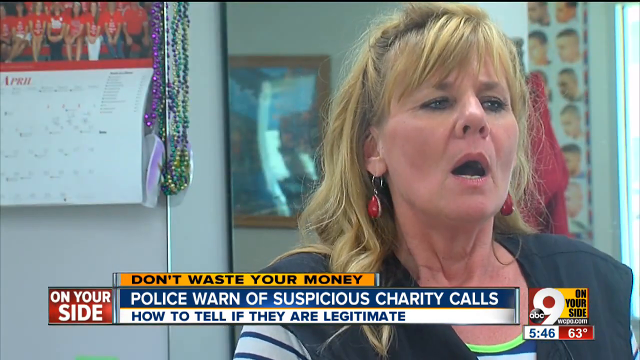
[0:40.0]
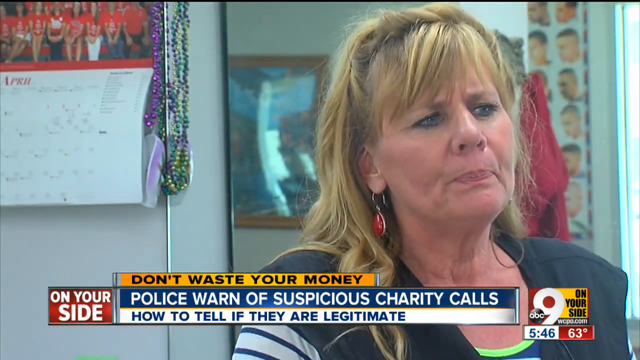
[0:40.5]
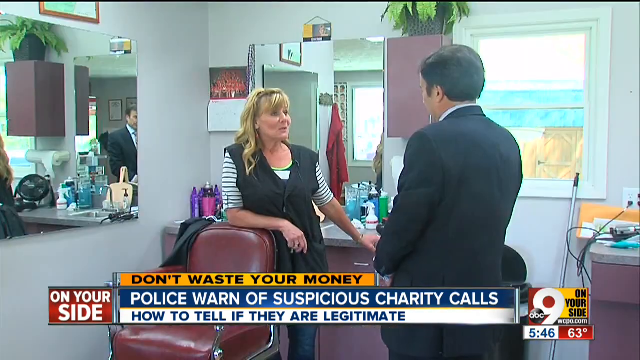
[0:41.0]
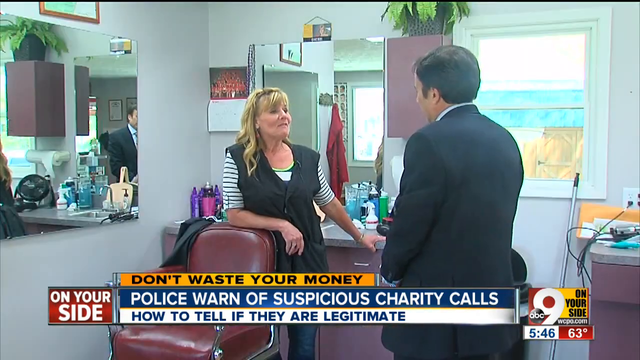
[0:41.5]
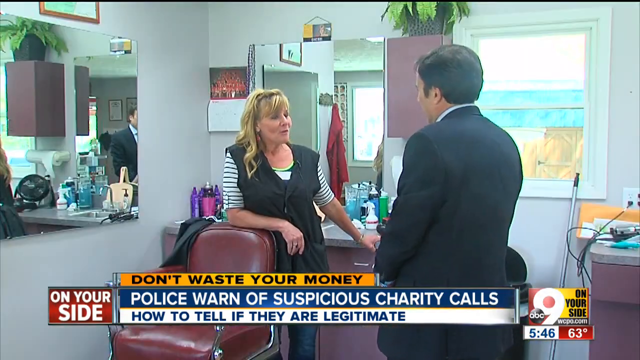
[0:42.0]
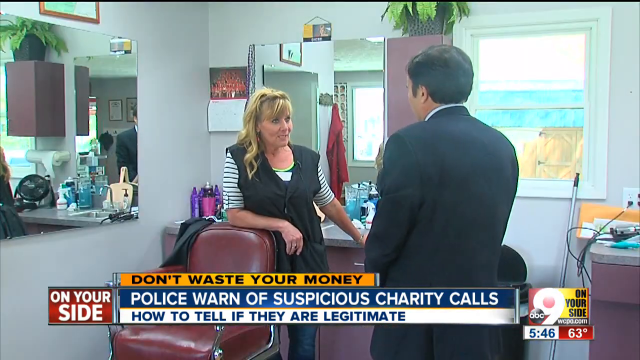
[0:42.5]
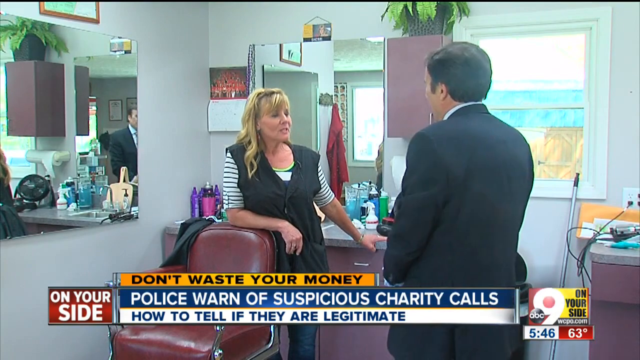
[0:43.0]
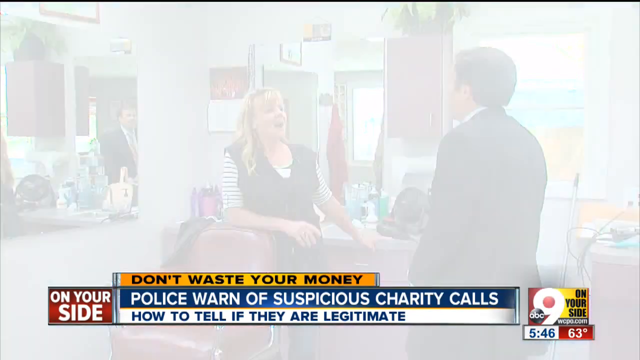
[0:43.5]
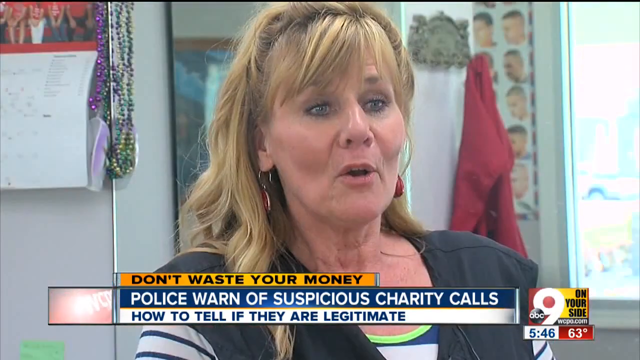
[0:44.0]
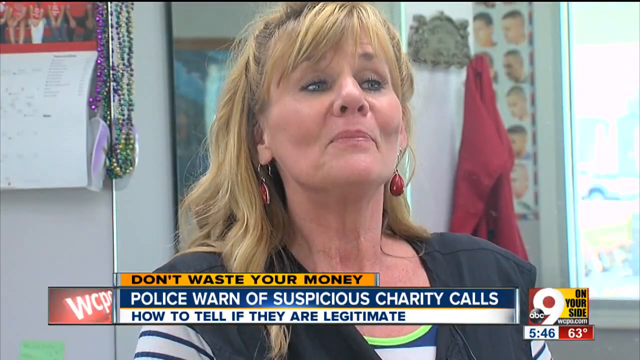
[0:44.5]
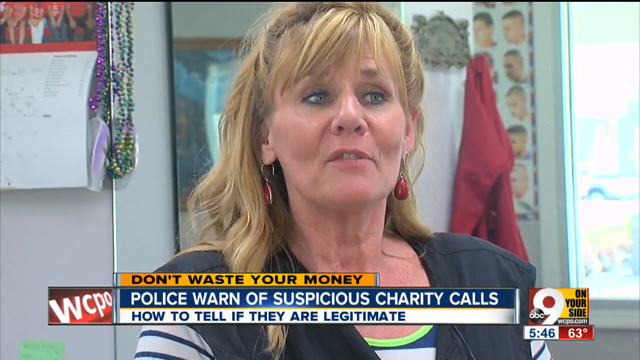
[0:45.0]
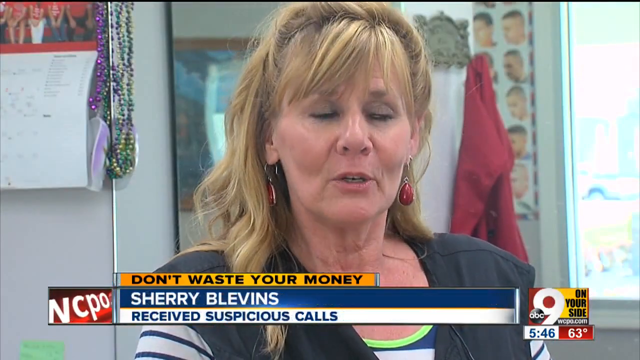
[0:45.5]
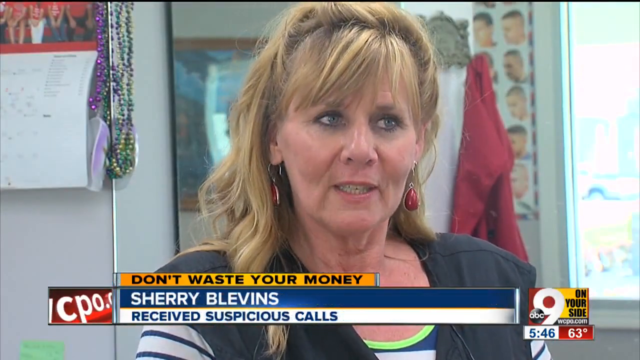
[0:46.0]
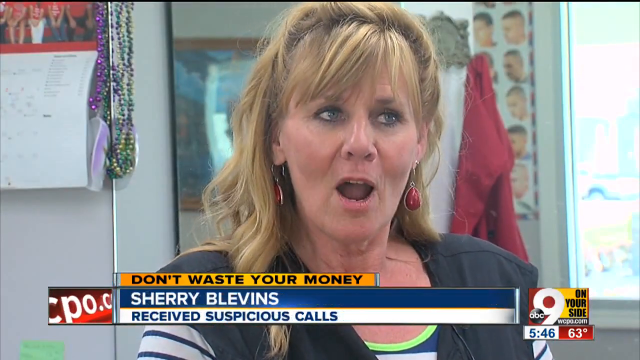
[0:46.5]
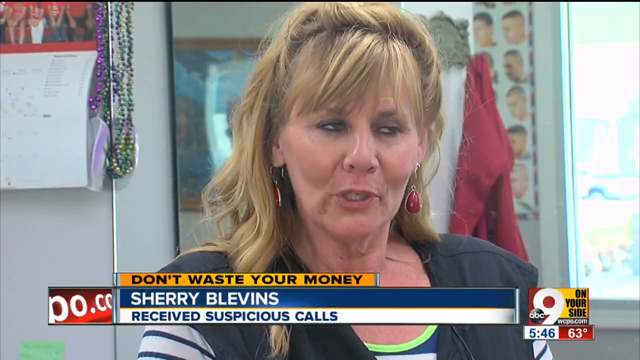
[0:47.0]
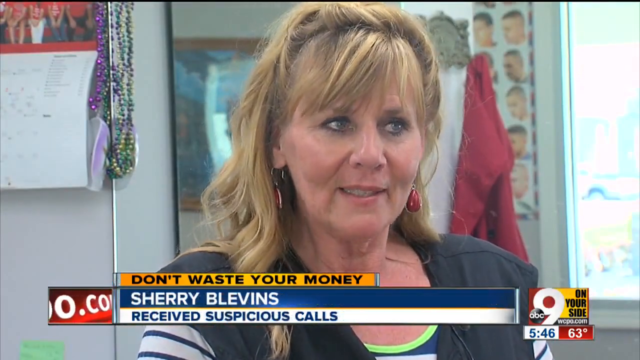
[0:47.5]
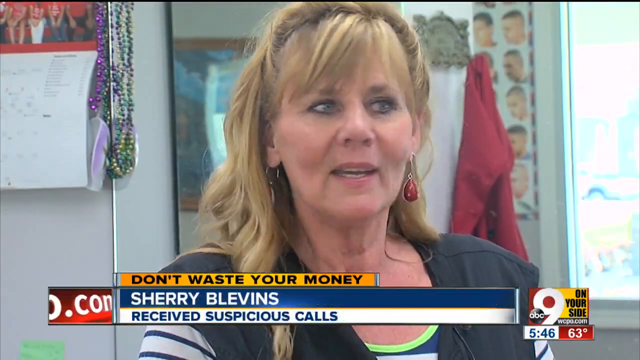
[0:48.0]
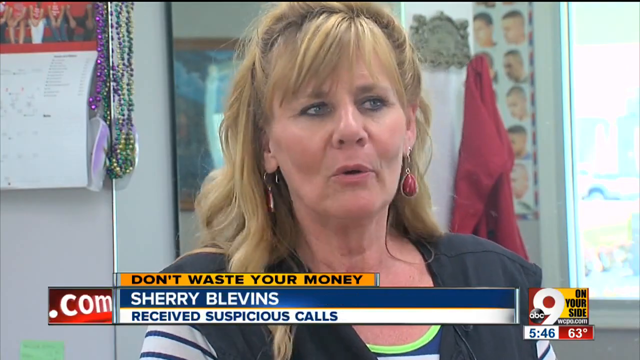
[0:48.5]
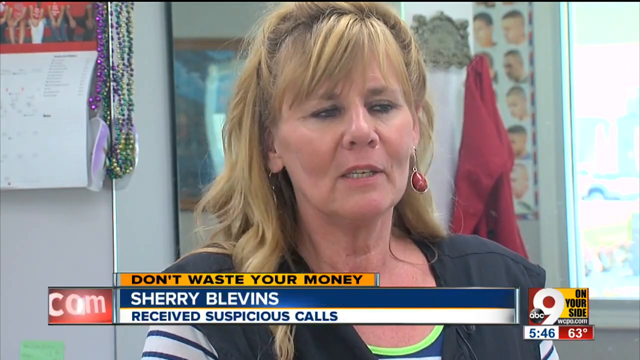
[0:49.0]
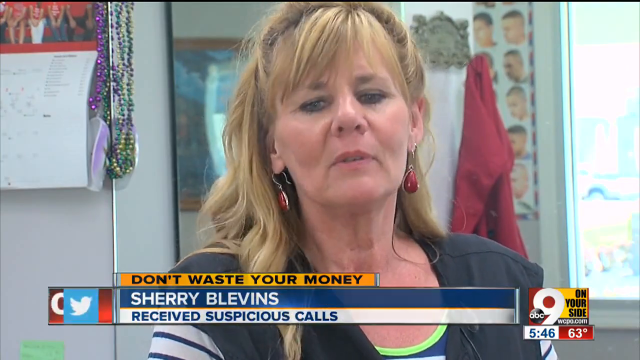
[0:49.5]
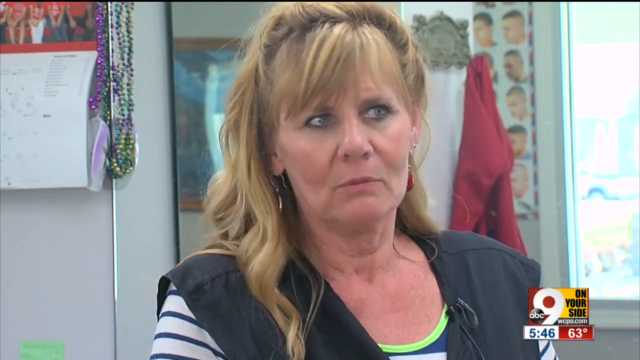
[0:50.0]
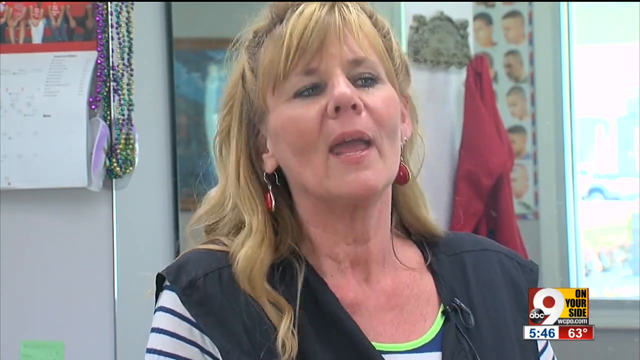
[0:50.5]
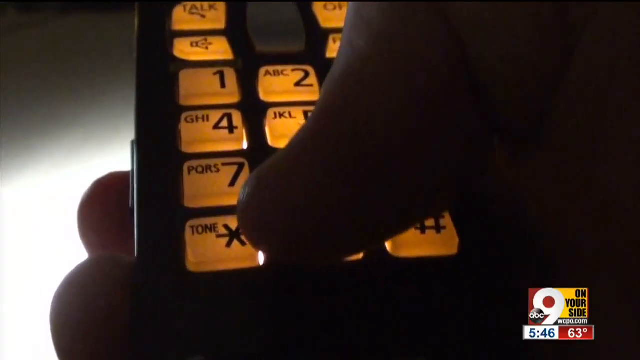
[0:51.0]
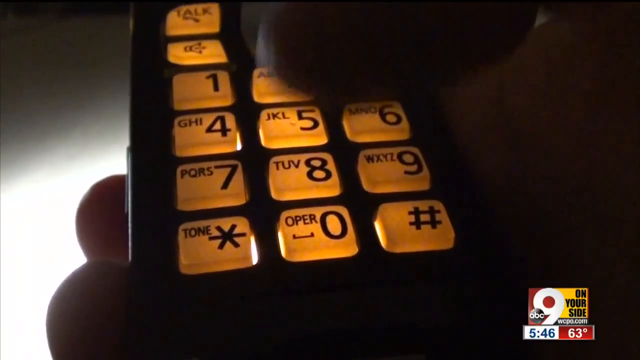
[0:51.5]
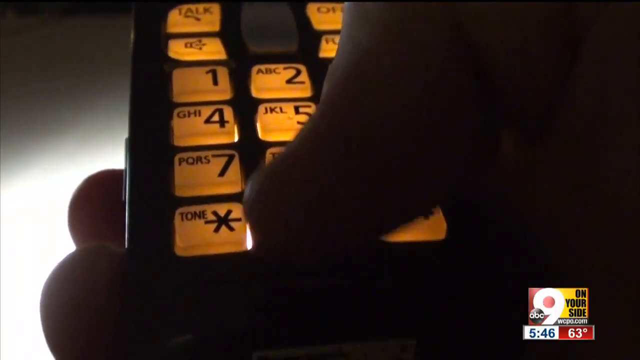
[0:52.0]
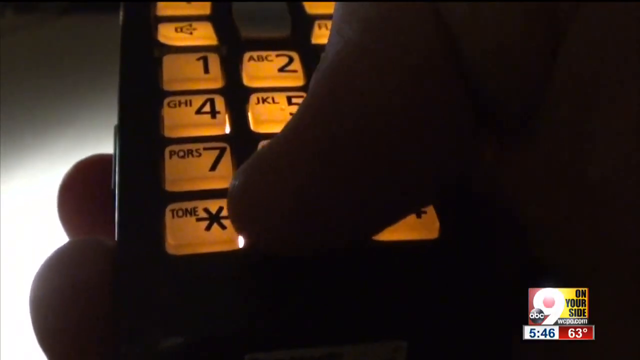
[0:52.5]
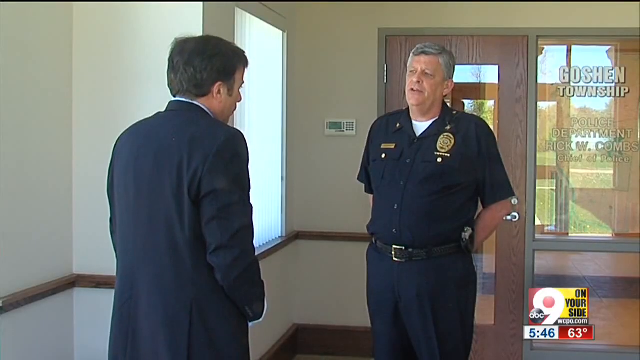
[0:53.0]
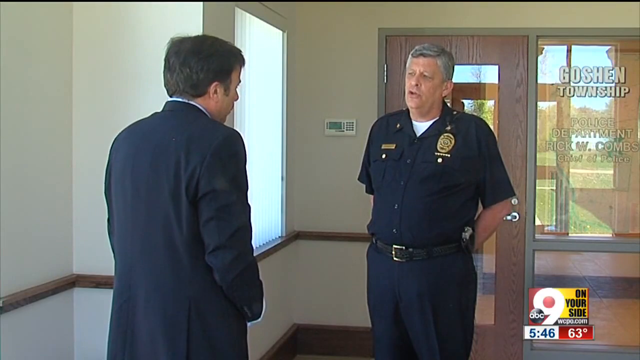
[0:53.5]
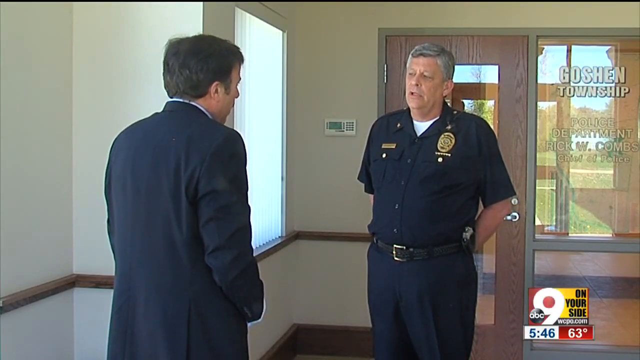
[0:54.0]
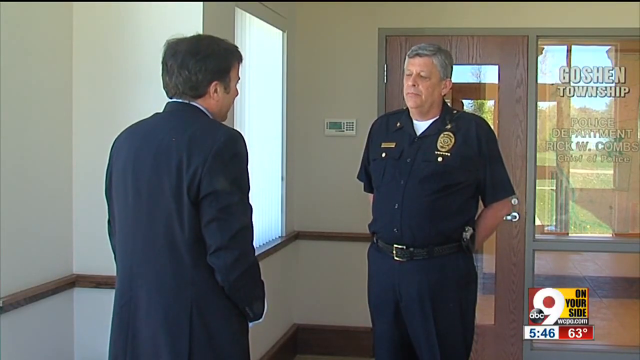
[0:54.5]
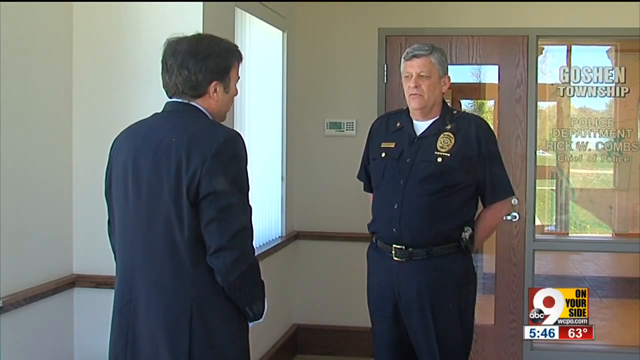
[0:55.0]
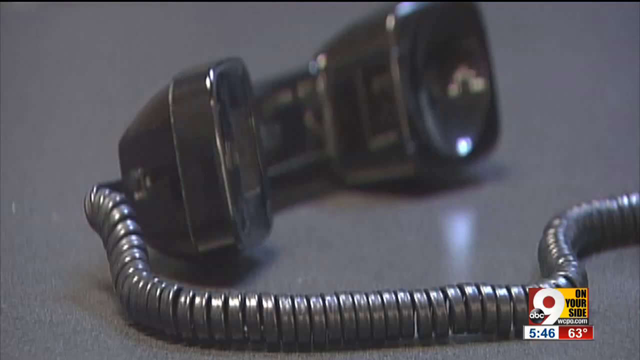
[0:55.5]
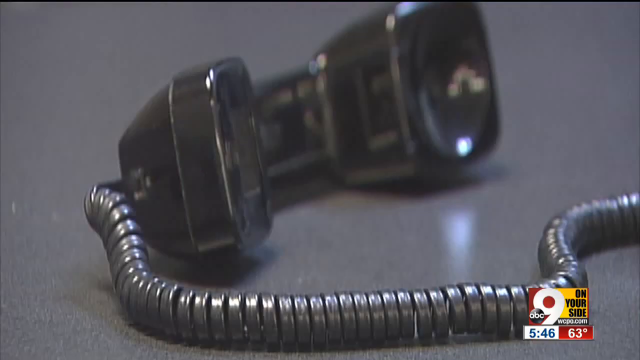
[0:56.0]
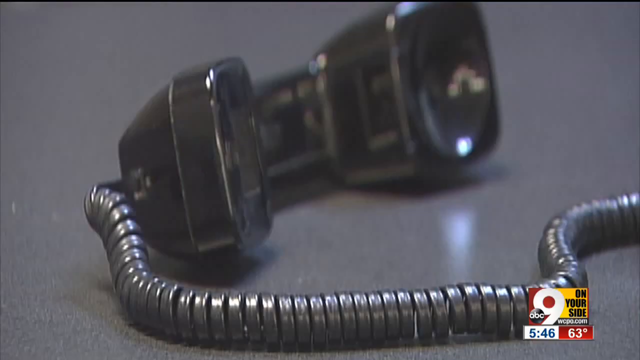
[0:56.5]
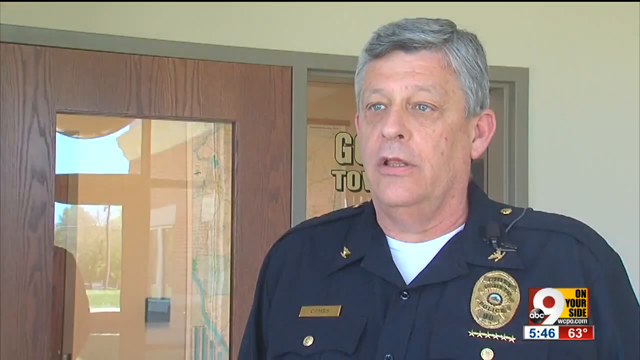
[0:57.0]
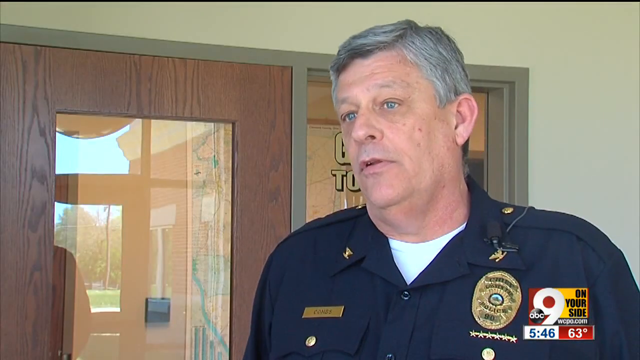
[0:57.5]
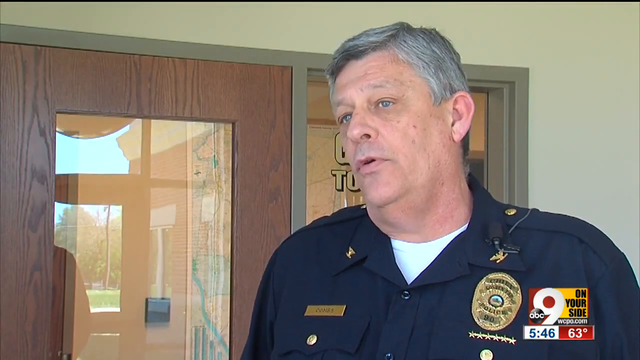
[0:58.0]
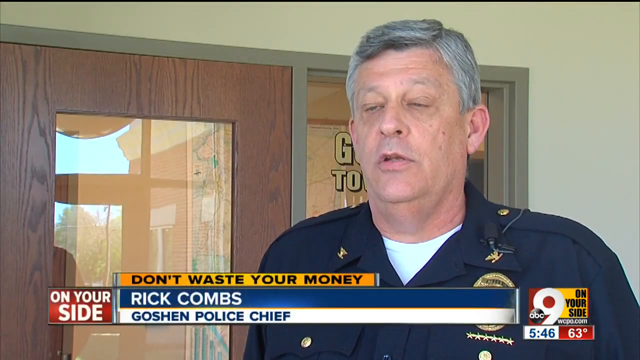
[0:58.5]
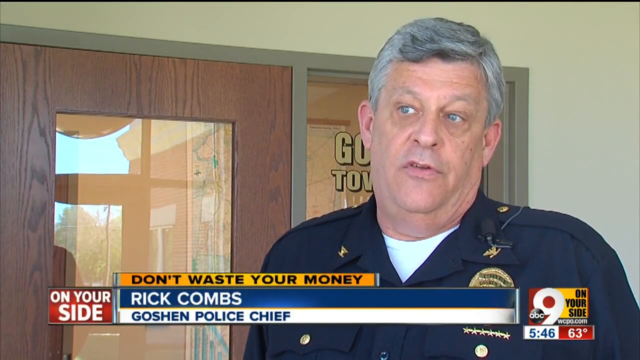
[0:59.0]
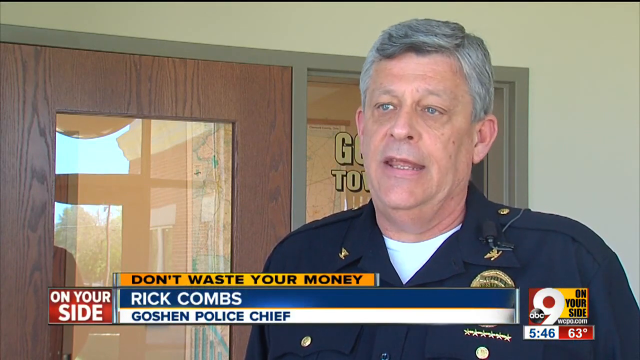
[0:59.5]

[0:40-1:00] A lady and a gentleman are standing in a salon. The gentleman wears a black blazer and seems to be wearing a white shirt, and the lady he is talking with wears a black and white T-shirt and a black bomber pullover jacket. The salon seems well equipped, with big mirrors and pictures of hairstyles to choose from, especially different men's haircuts shown on different faces. There is a maroon leather chair used for customers. Next, a policeman named Rick Combs appears, talking with the man in the black blazer and white shirt. The lady they were talking to is named Sherry Blevins.